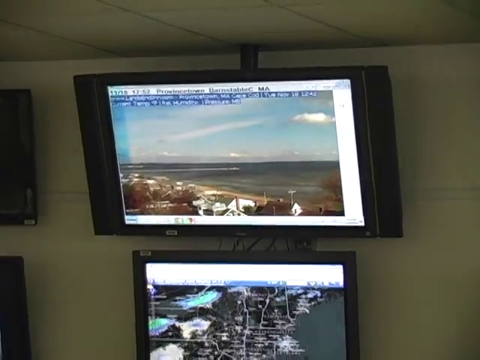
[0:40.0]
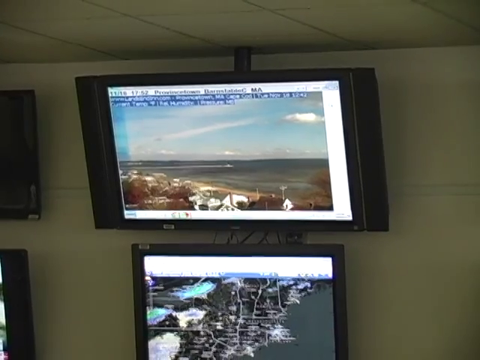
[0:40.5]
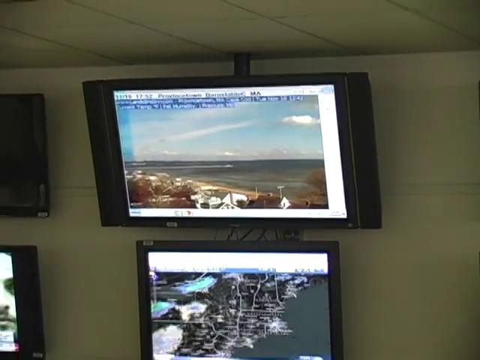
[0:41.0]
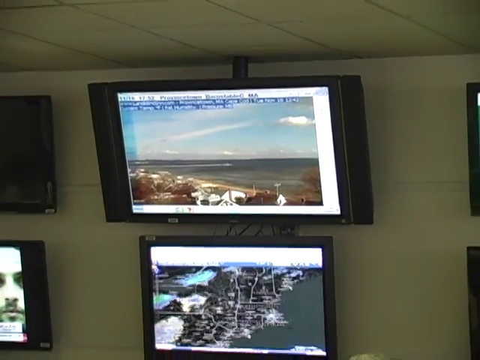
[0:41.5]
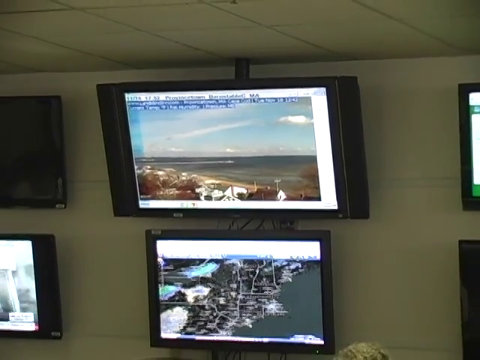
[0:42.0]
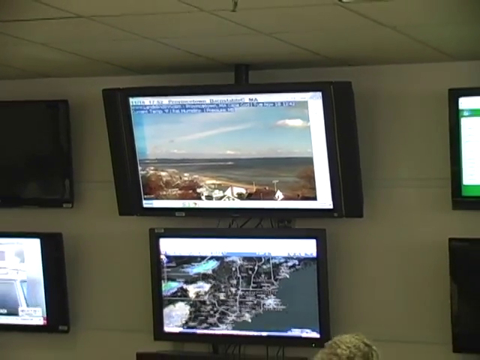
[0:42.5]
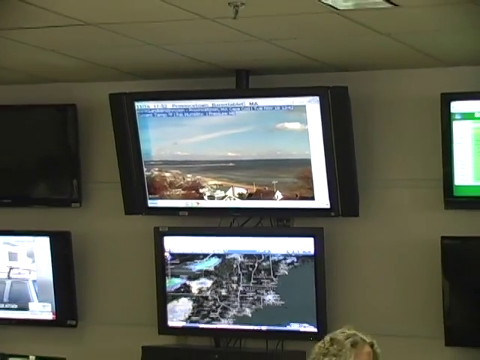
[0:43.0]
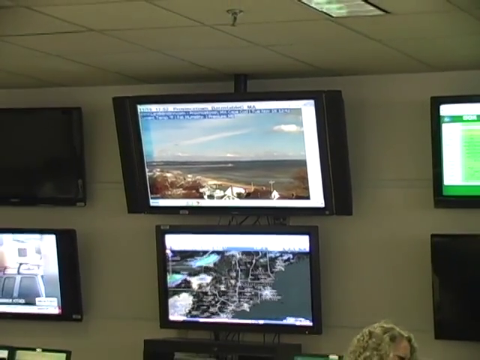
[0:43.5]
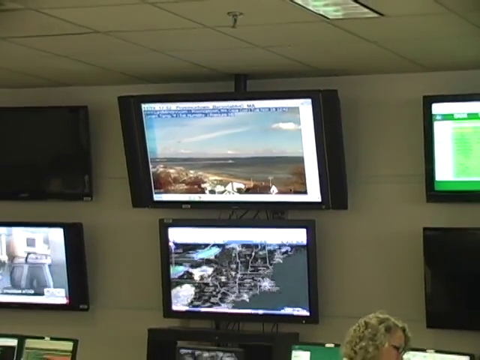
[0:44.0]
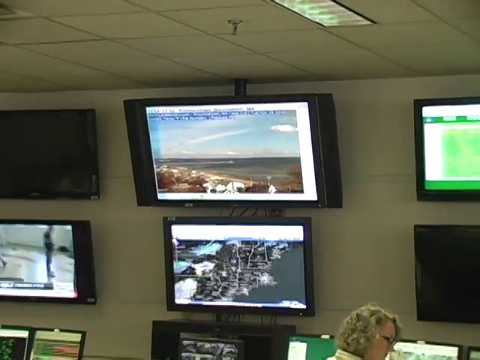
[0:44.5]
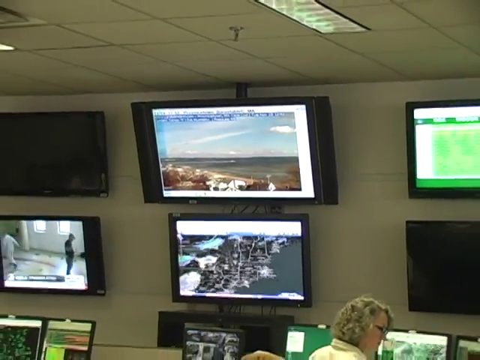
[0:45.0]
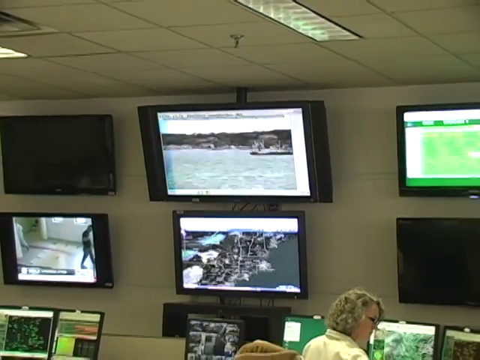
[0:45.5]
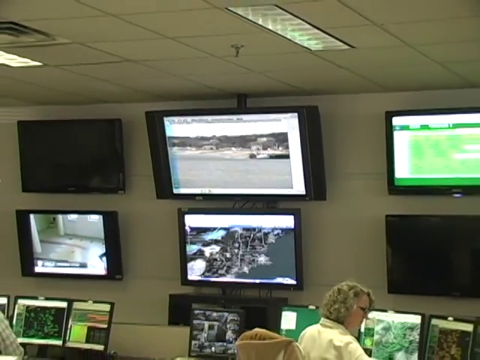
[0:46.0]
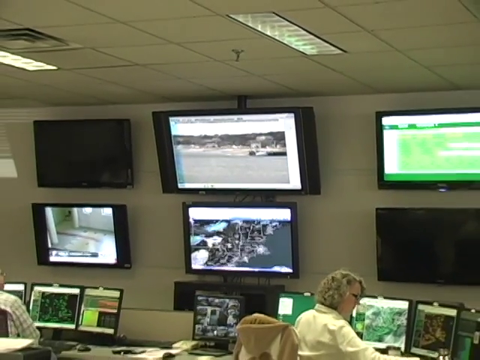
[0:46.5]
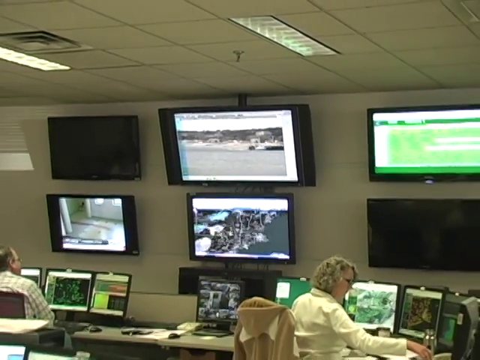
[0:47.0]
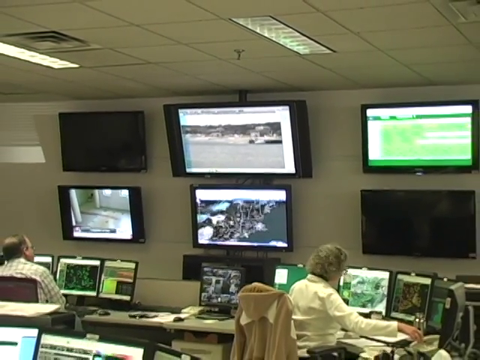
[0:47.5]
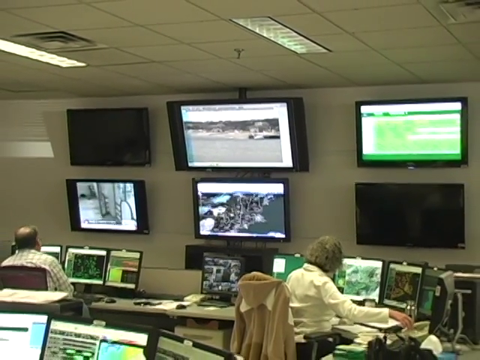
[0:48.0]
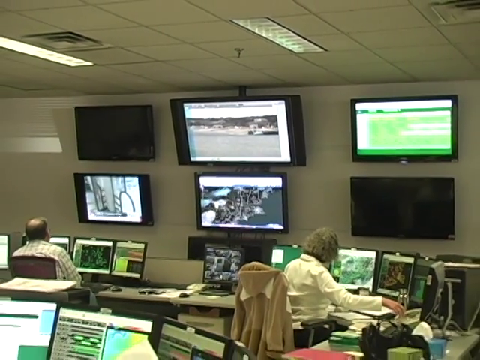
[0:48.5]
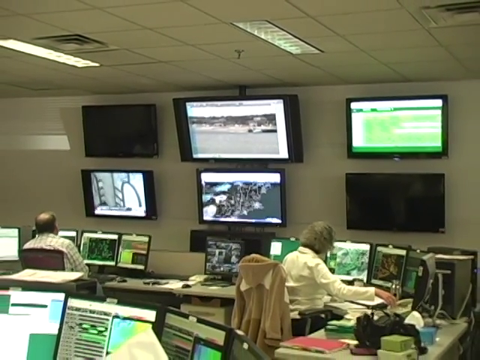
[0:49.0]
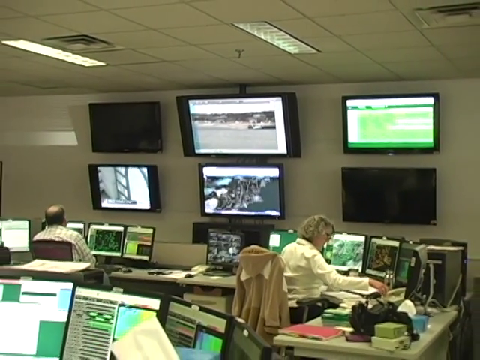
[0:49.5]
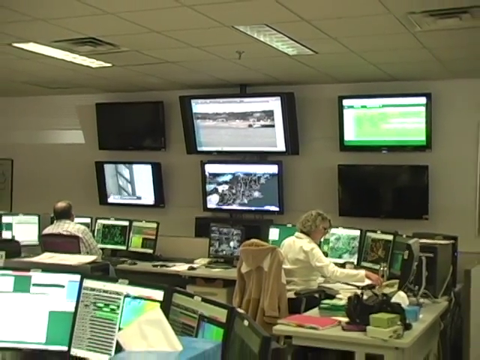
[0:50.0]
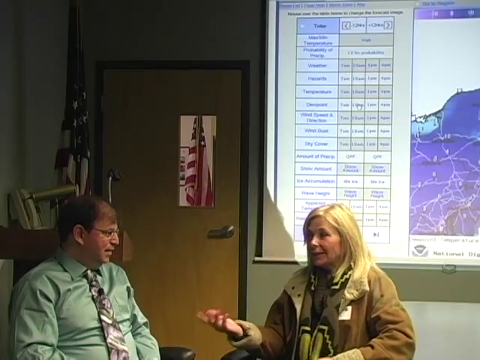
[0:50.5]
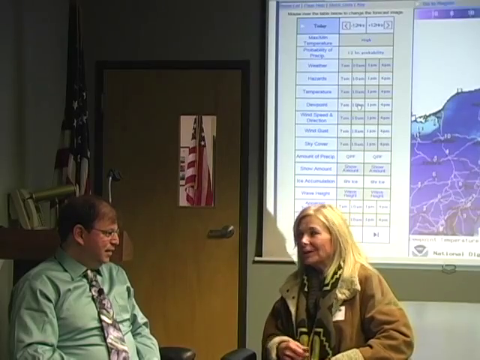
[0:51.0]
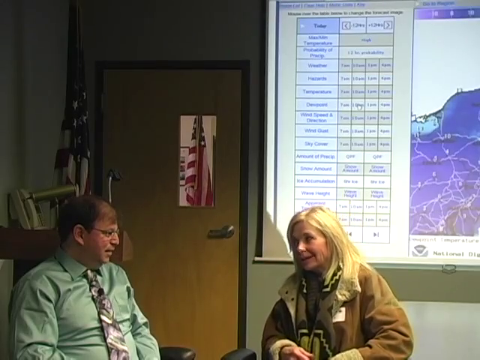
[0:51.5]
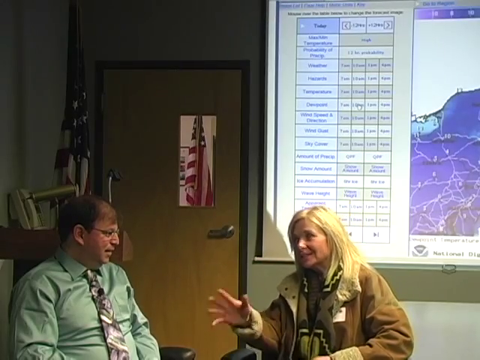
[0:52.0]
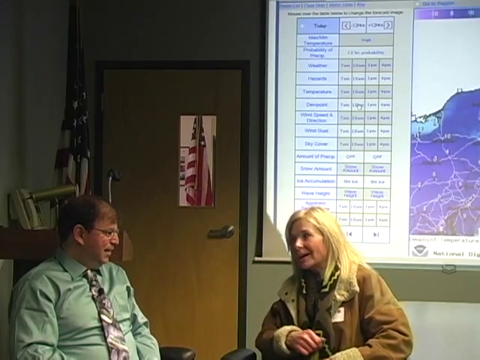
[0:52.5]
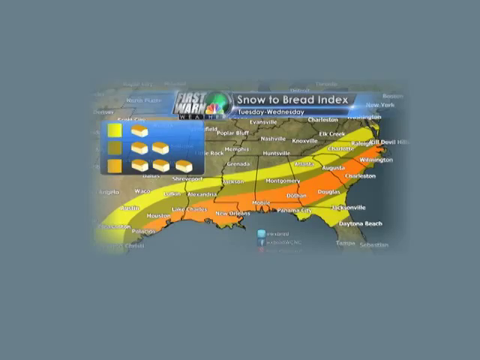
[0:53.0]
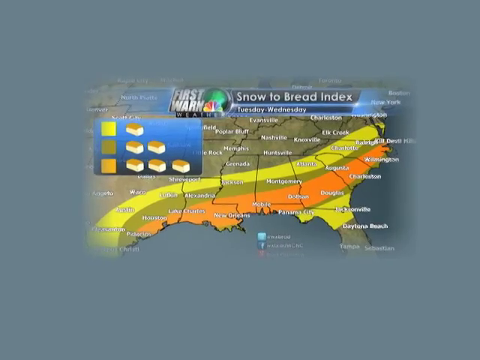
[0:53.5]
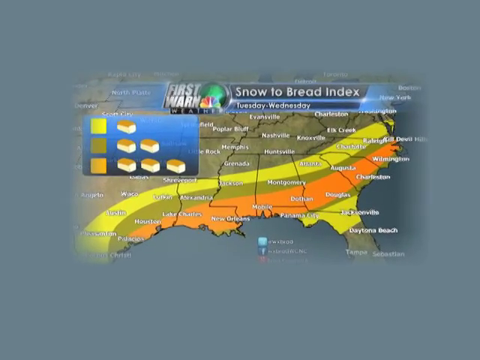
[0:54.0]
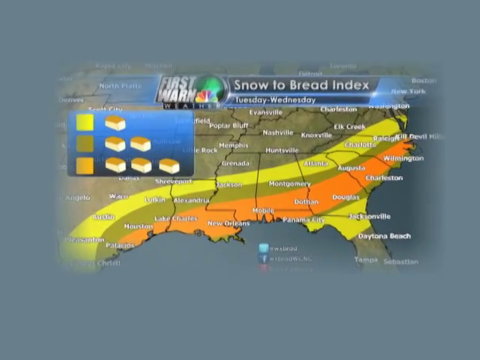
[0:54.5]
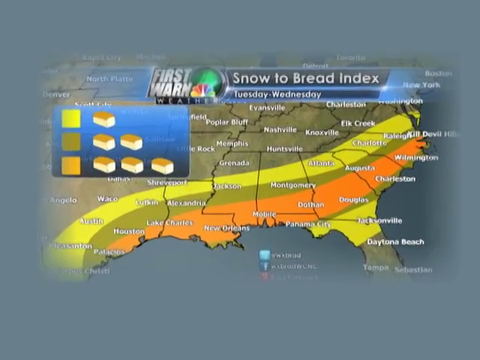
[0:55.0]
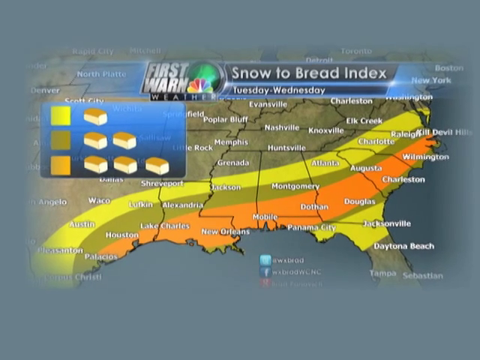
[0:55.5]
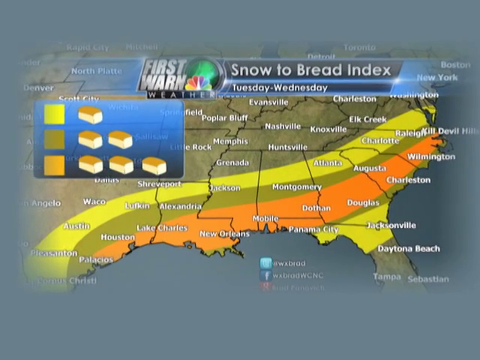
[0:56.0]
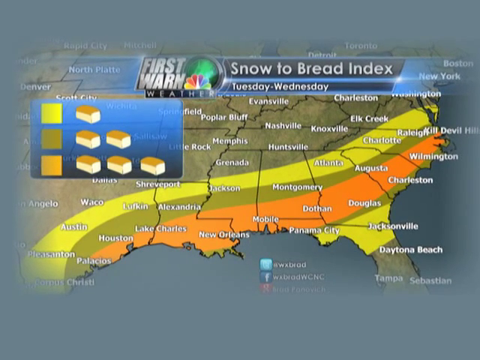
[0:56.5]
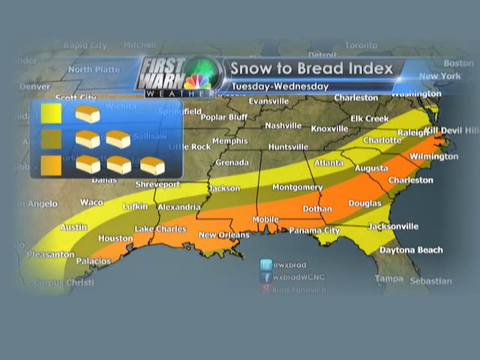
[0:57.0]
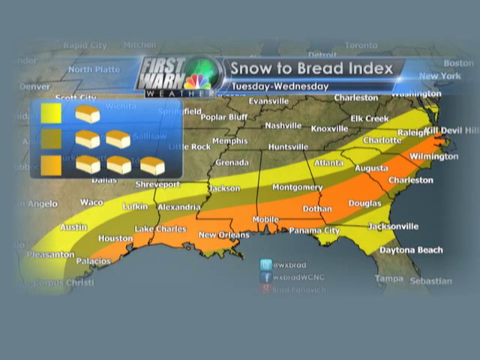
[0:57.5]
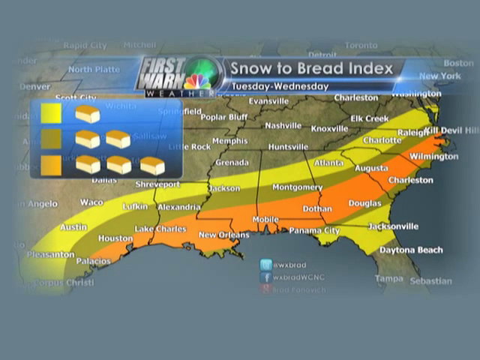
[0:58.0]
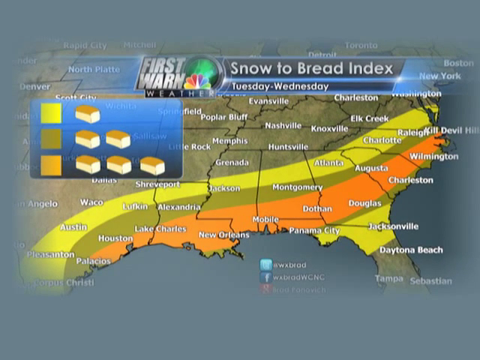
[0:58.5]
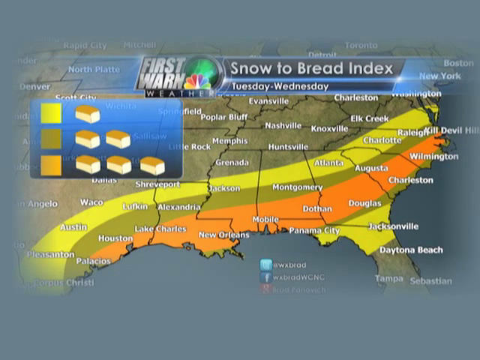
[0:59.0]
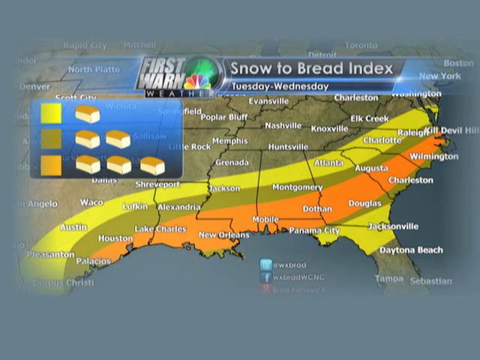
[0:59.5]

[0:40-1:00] Two screens, then three screens are shown, and the camera zooms back to an office with a bunch of screens and people working at their desks. The video switches to a man and a woman communicating in what looks like an office of some sort. A map of a country shows snow and how much snow each province is going to get. The video then returns to the TV screen in the office, showing a picture of an office with two people working in it, a picture of the sea, and a man and a woman working in the office. Two people then talk and agree on something in an office, next to an American flag, seemingly having a conversation about their work. The video then switches to a map of what seems to be a country.